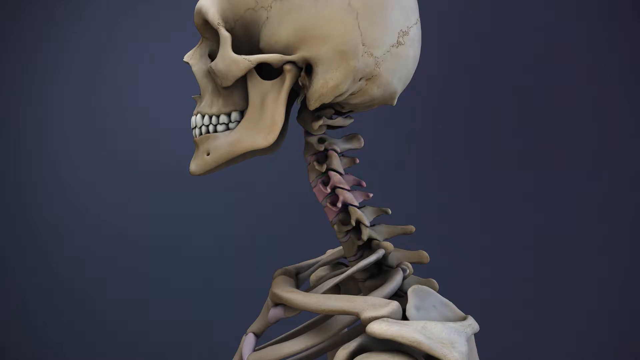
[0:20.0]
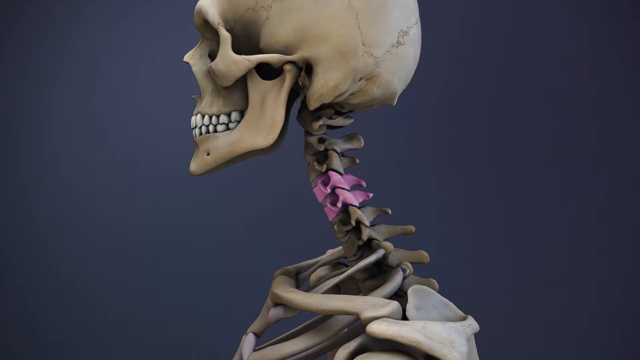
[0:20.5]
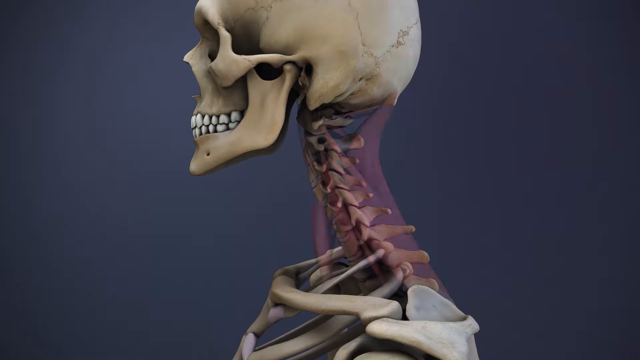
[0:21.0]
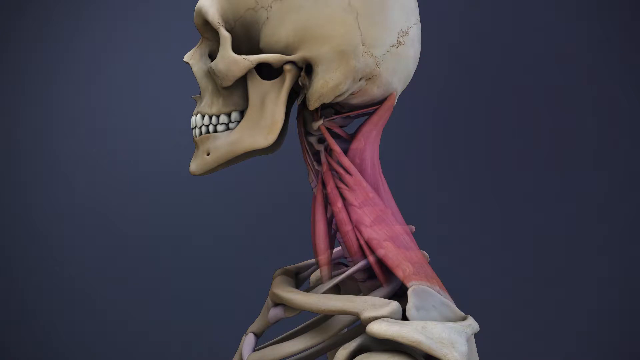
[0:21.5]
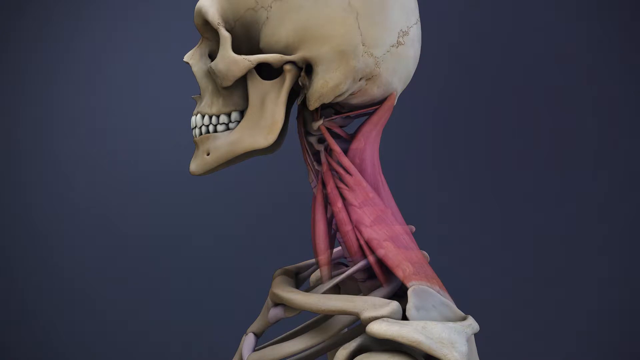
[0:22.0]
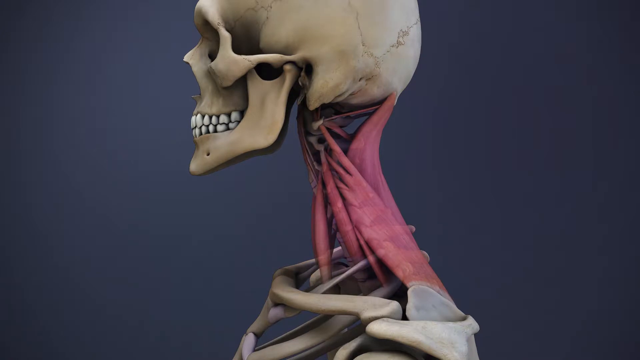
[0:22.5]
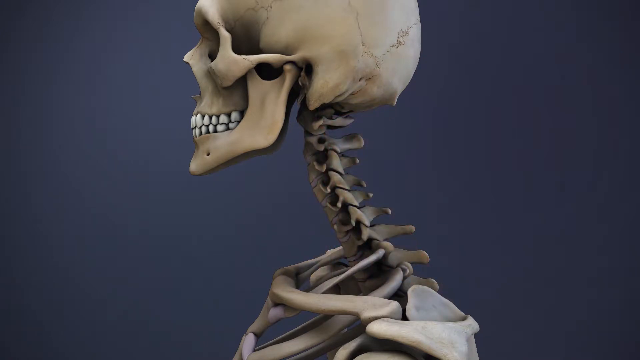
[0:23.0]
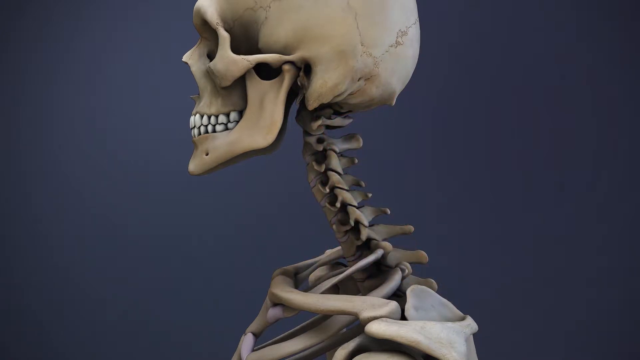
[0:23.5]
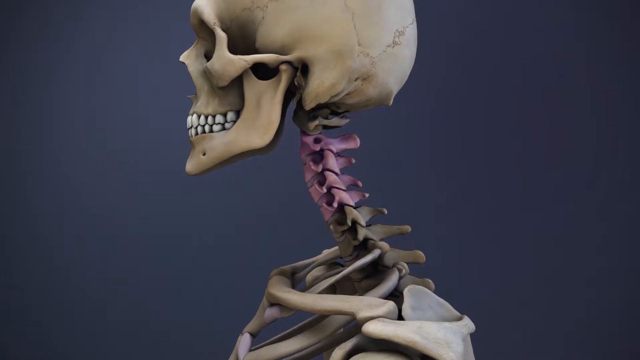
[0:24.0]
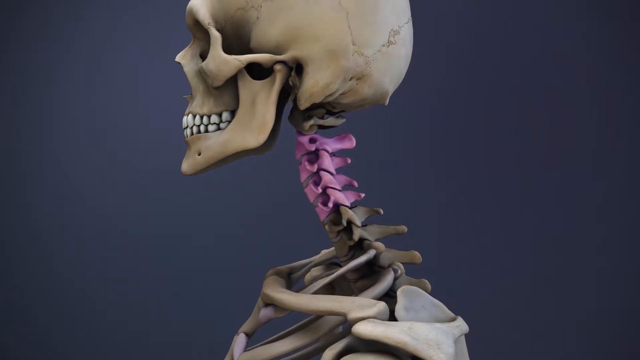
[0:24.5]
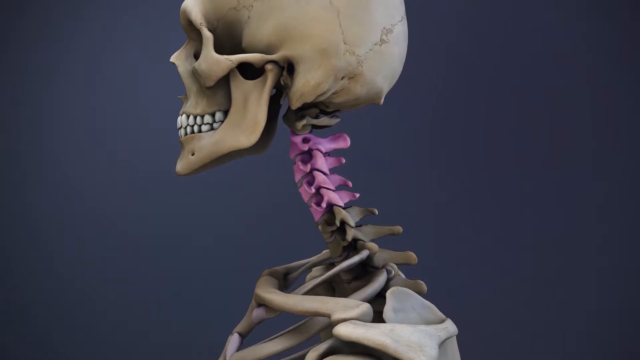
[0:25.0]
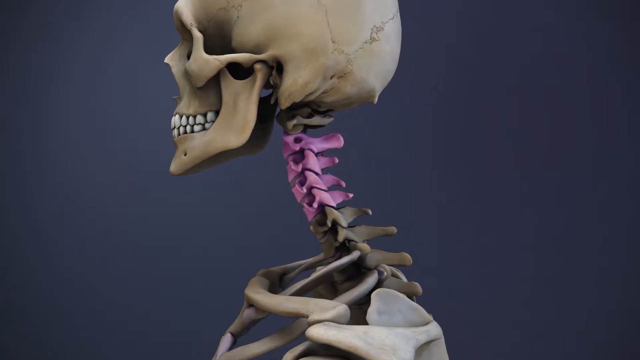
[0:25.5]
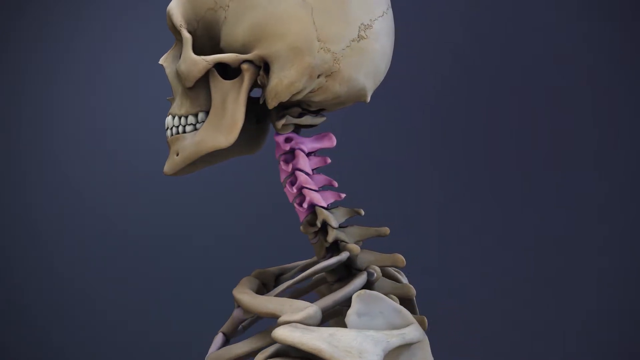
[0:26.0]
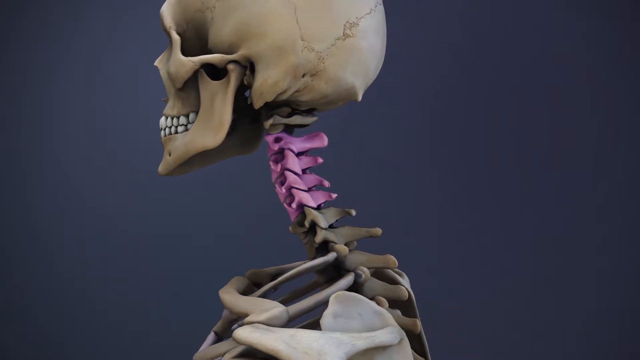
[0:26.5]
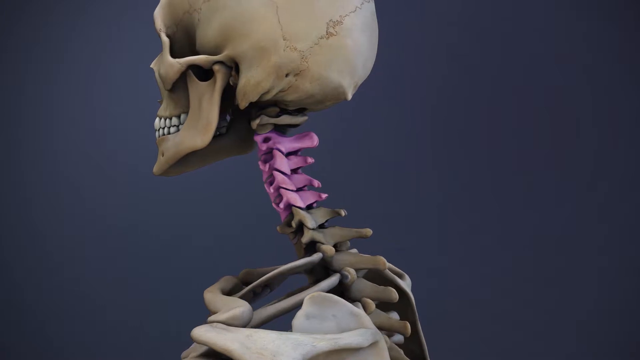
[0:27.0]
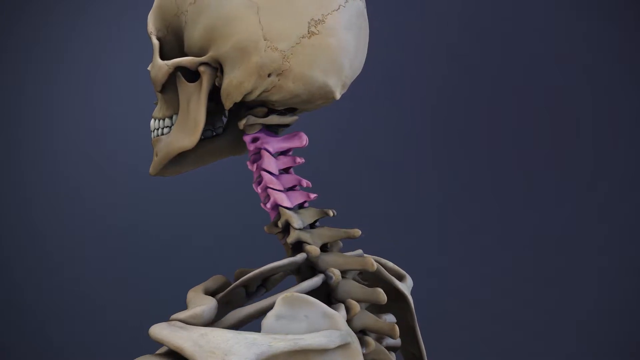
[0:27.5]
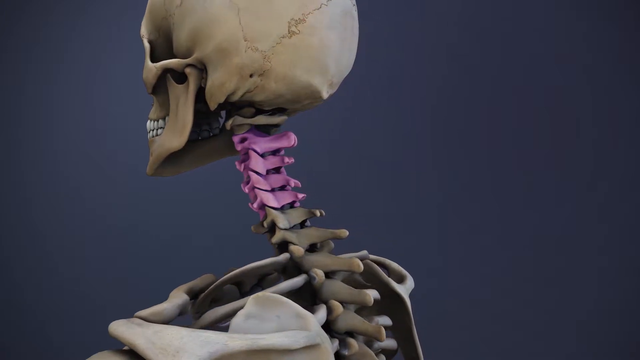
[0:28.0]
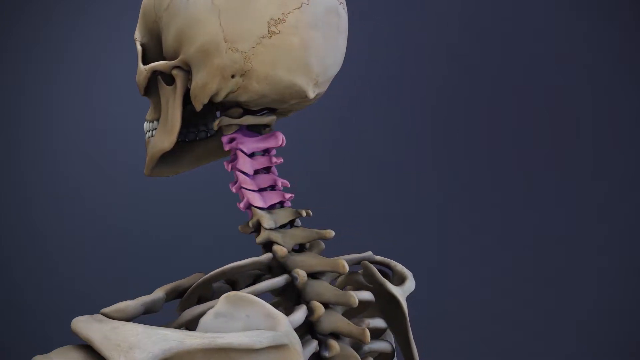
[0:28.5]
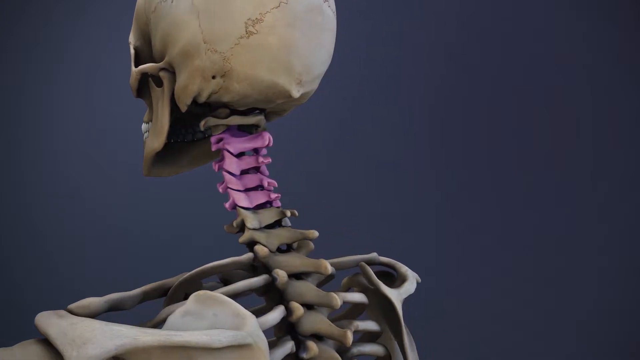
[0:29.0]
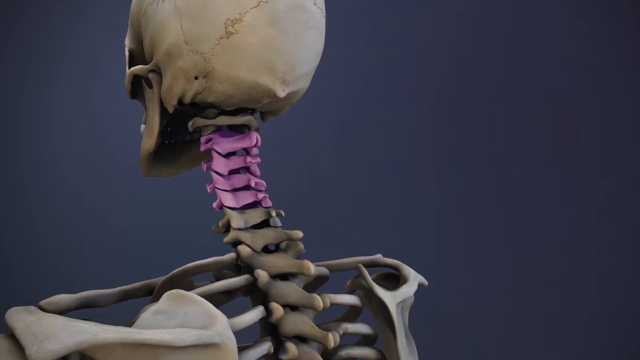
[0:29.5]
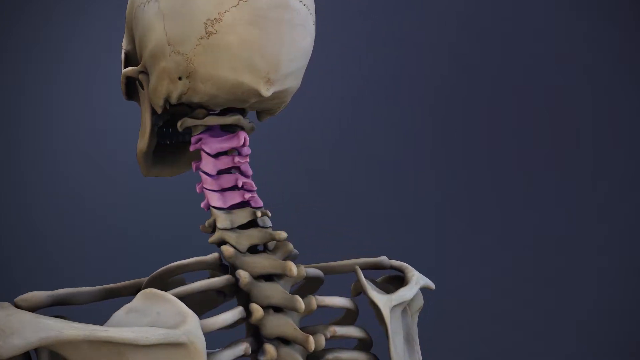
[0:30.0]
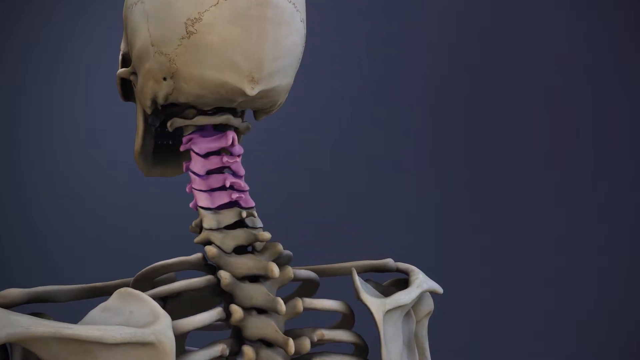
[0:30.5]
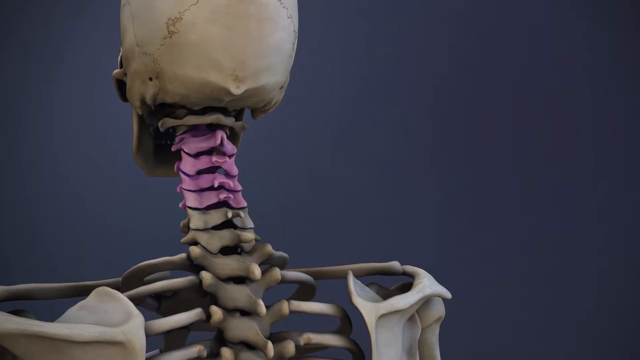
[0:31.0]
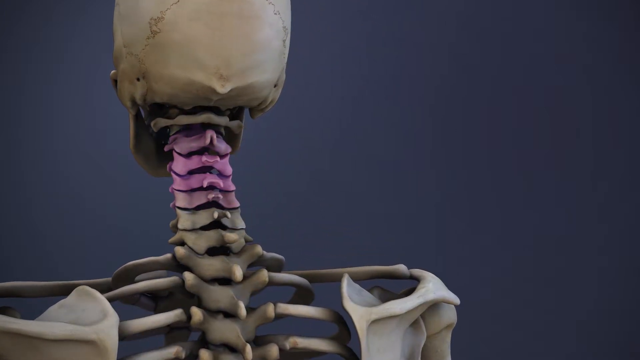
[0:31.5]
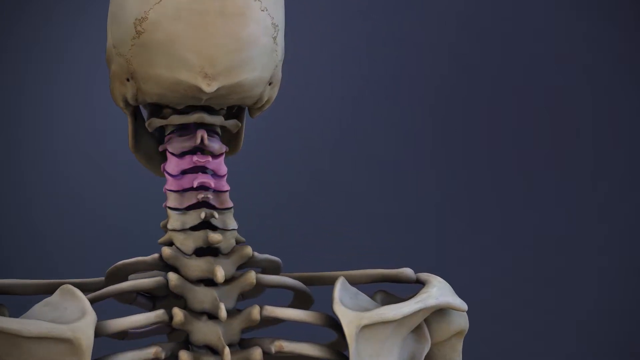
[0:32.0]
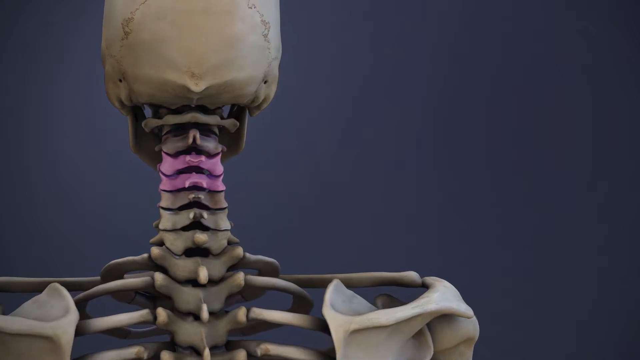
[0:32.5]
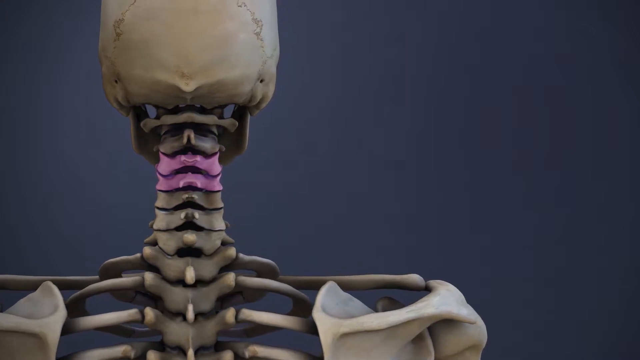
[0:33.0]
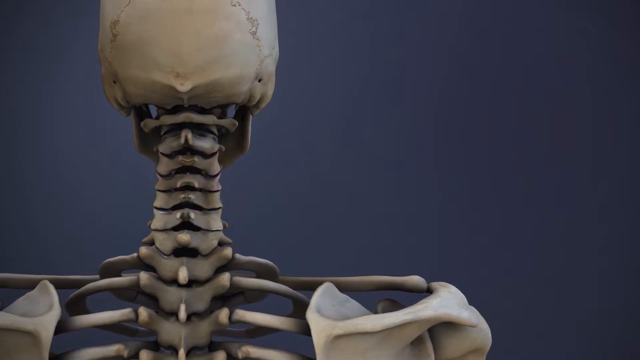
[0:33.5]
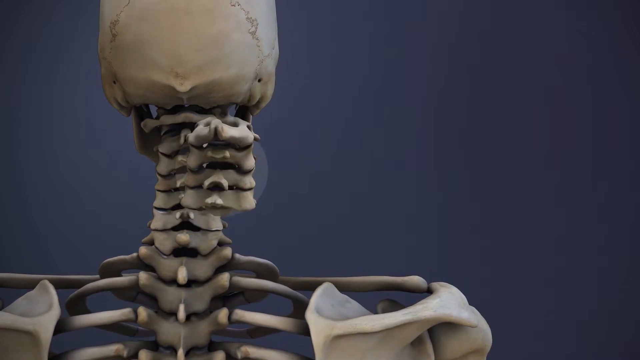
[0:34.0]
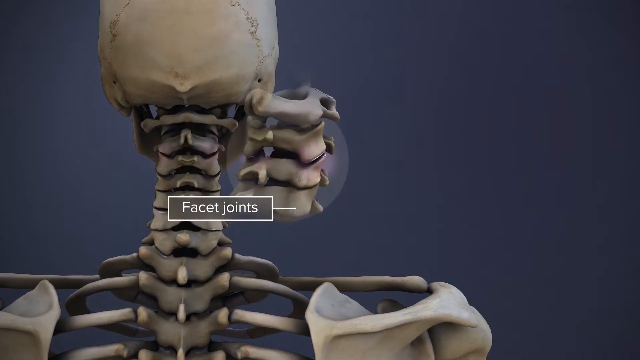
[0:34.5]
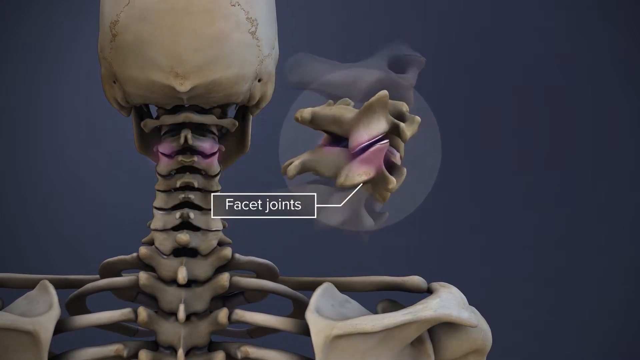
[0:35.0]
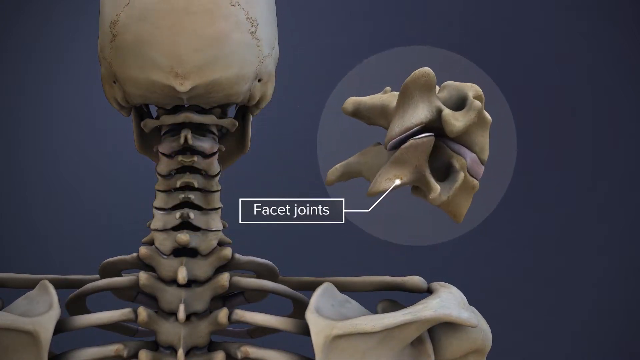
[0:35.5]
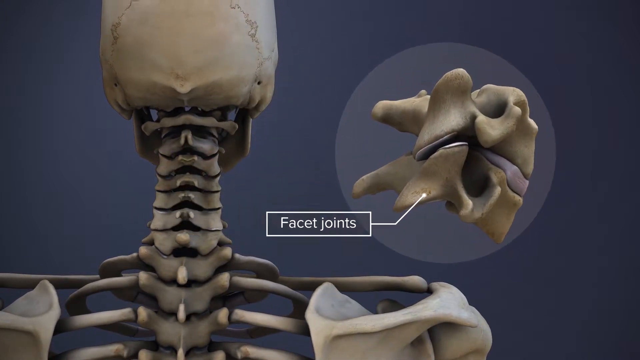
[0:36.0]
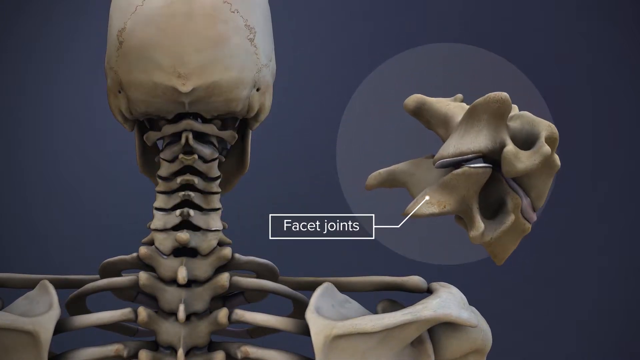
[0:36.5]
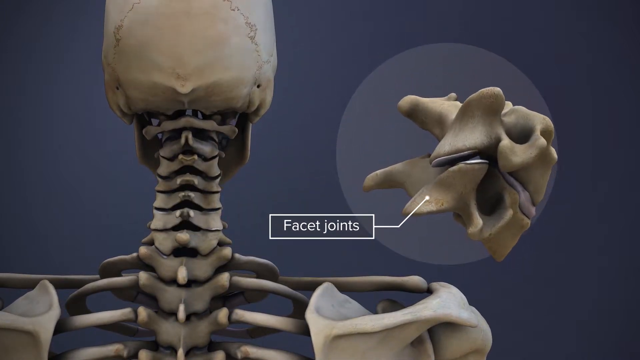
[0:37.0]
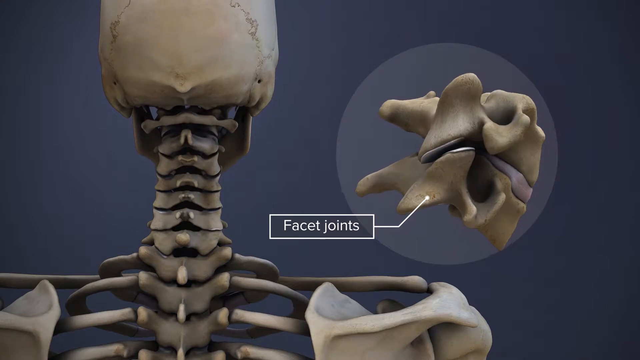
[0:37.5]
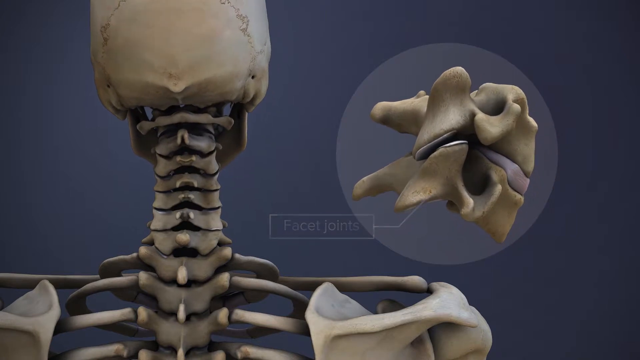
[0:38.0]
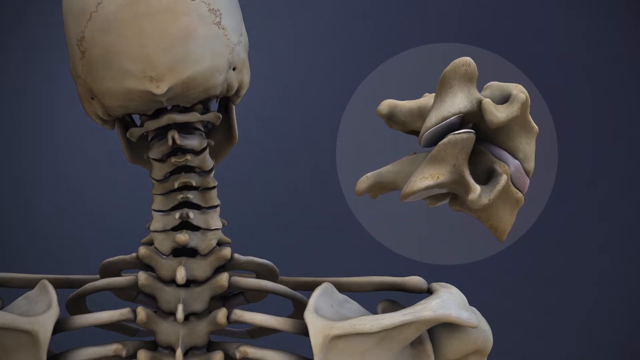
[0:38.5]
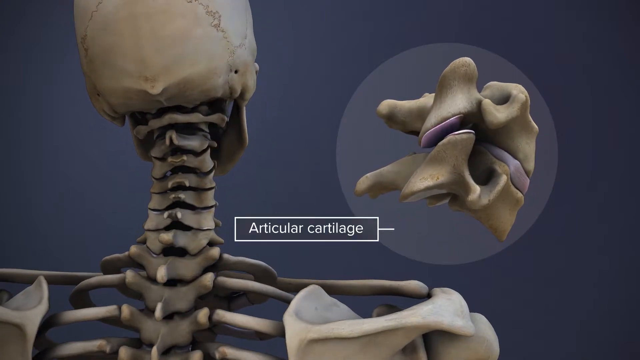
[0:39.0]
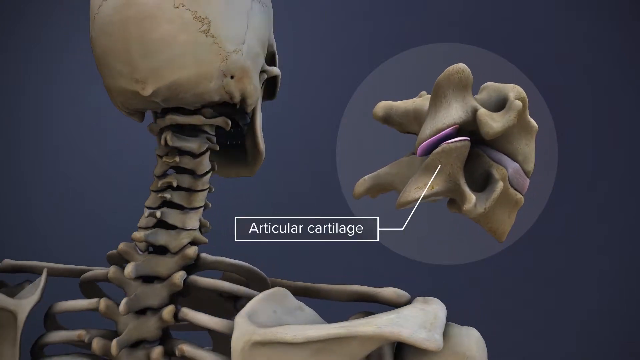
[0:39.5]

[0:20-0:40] The view of the left side of the skeleton's neck continues as muscle tendons form on the neck and then disappear. A section of the upper neck area is highlighted light purple, and the skeleton rotates to show the back of its neck. The view zooms in on the part of the neck being examined and shifts to the right side, where the words "facet joints" point to that area. On the left side, the back of the skeleton's neck, skull and back remain visible, while on the right side a close-up view of the facet joints is shown. The skeleton moves its head around, and its body begins to rotate again.